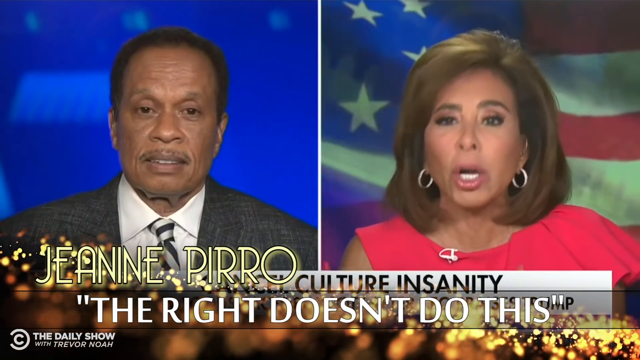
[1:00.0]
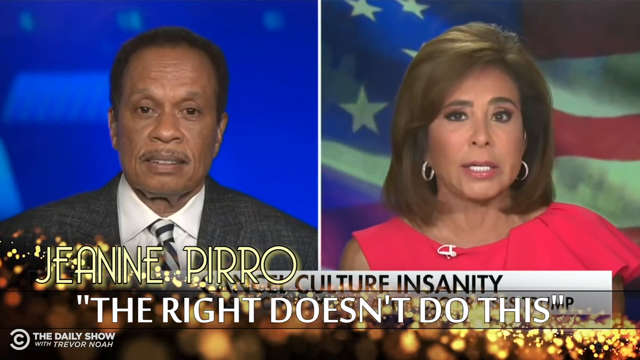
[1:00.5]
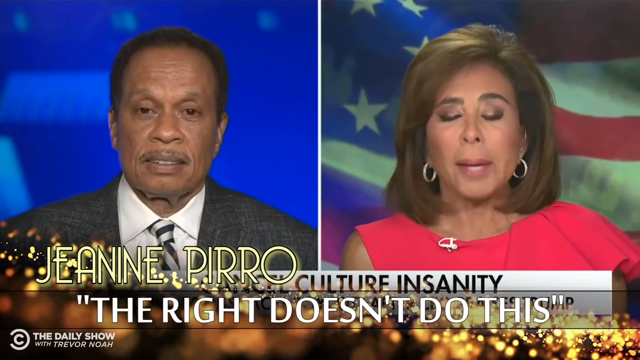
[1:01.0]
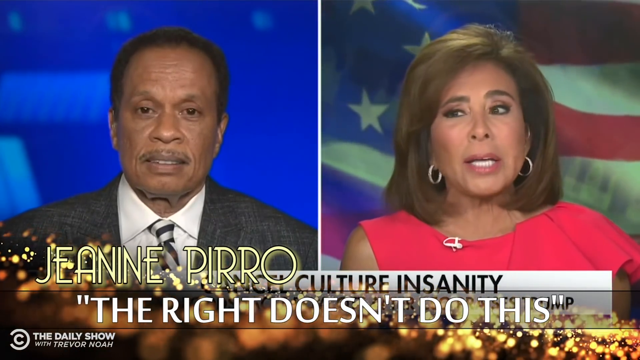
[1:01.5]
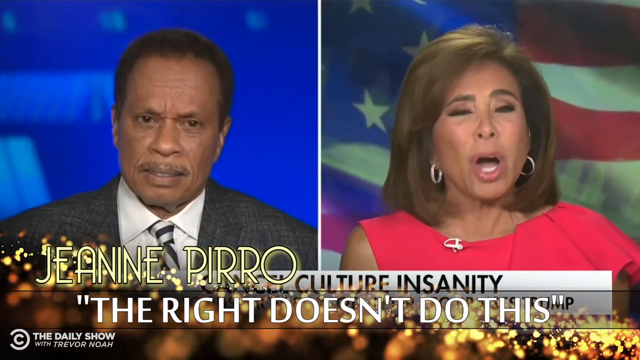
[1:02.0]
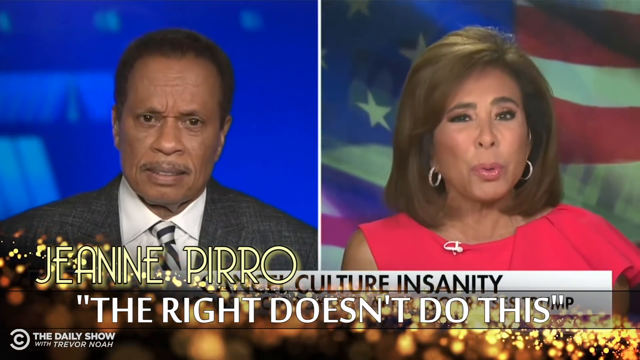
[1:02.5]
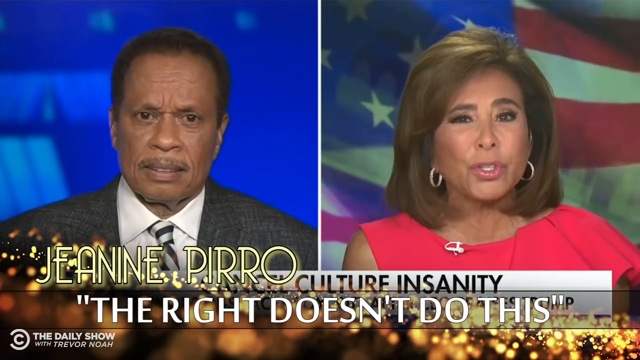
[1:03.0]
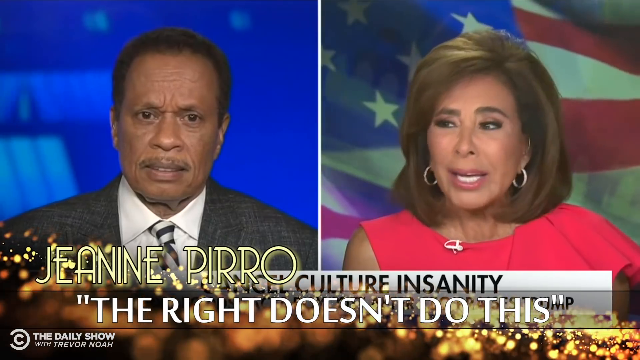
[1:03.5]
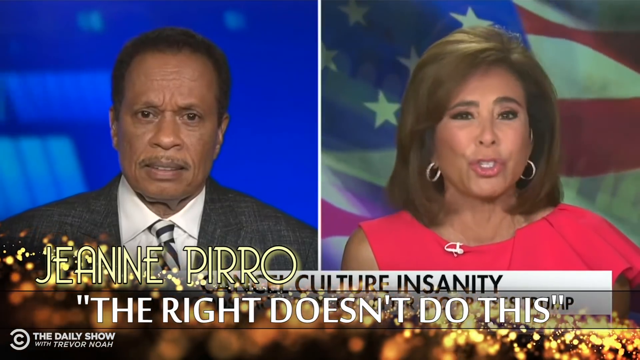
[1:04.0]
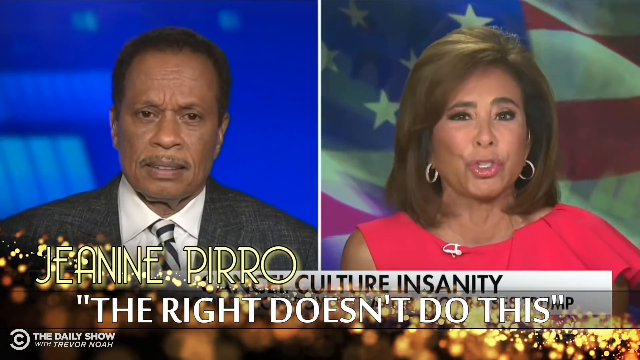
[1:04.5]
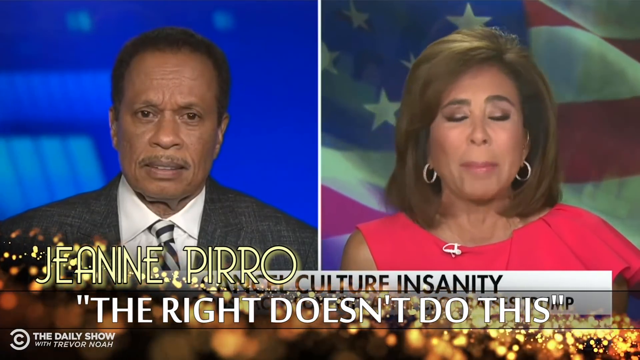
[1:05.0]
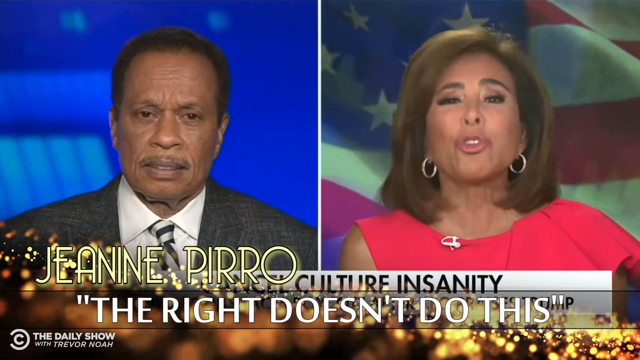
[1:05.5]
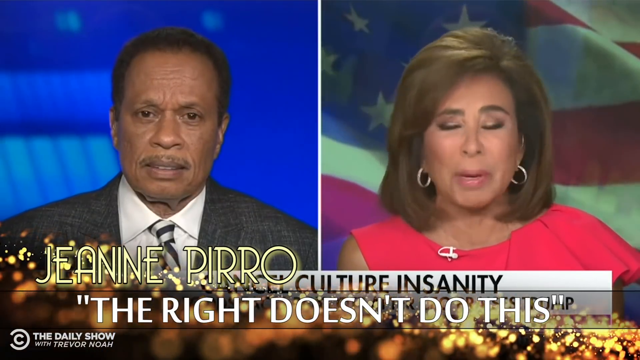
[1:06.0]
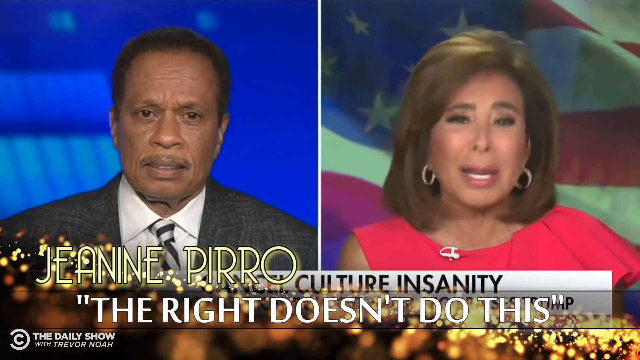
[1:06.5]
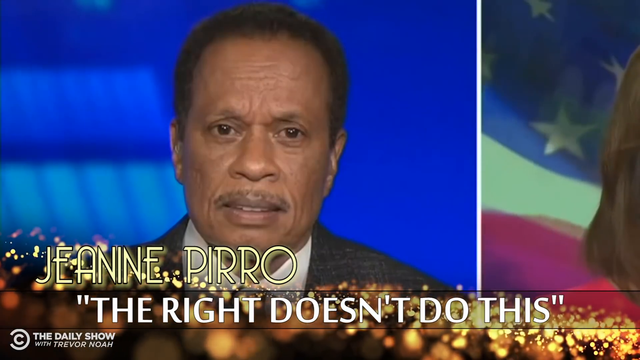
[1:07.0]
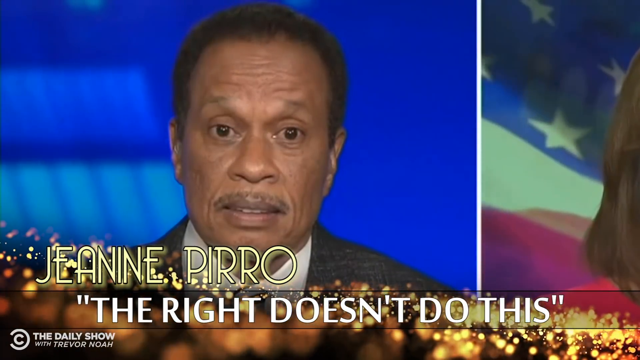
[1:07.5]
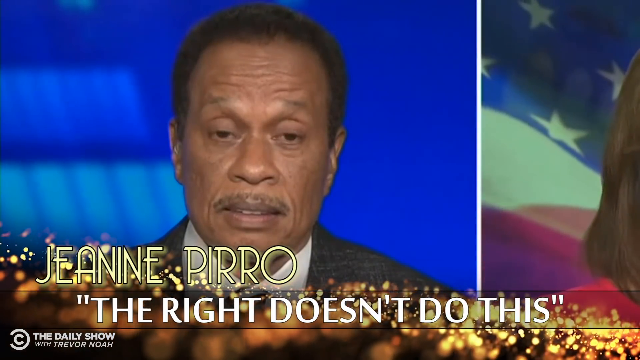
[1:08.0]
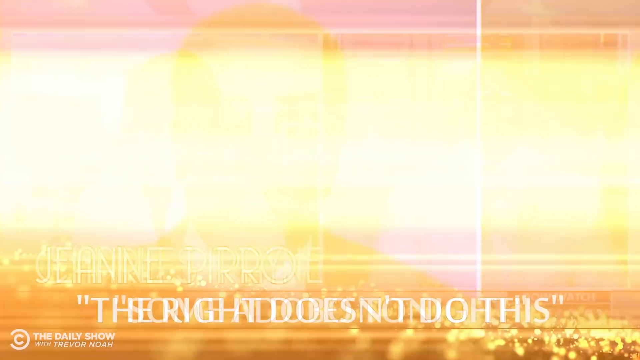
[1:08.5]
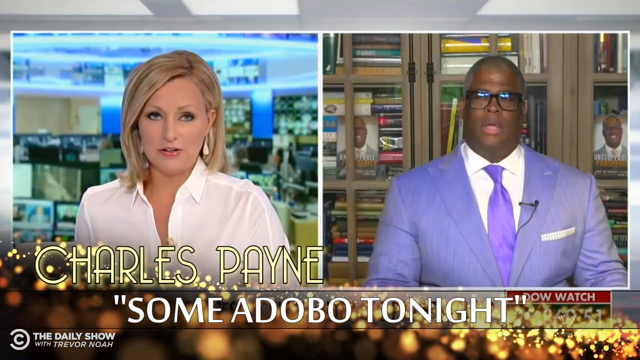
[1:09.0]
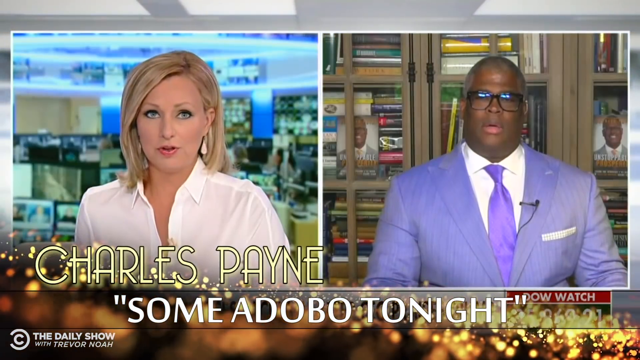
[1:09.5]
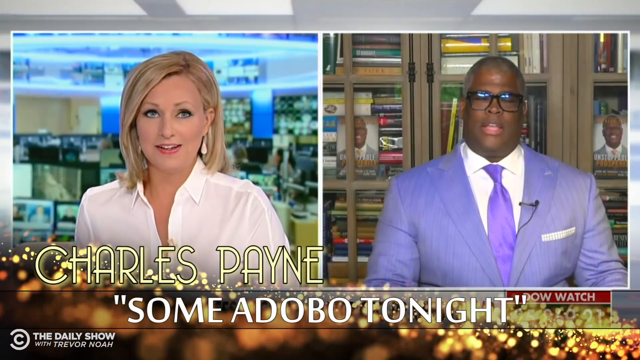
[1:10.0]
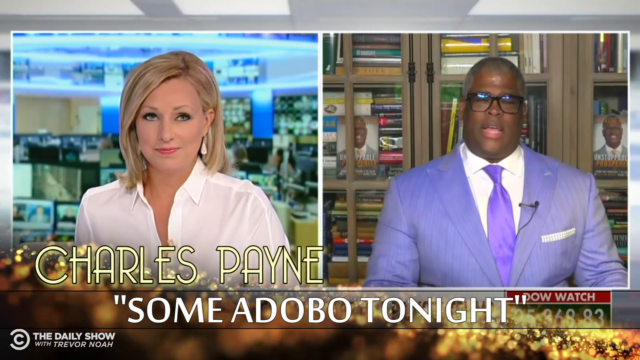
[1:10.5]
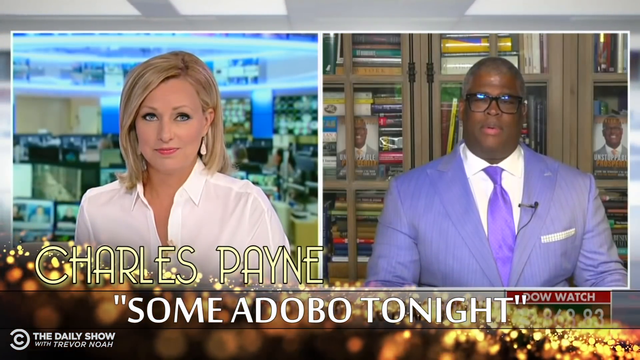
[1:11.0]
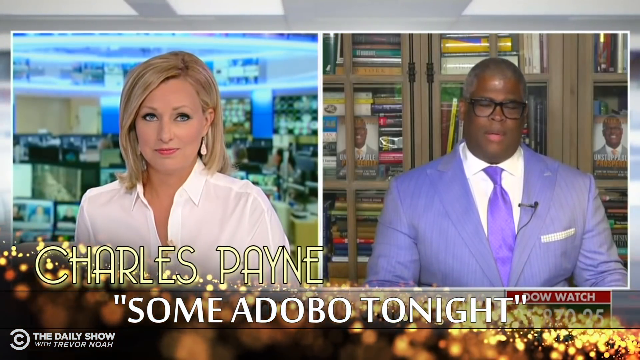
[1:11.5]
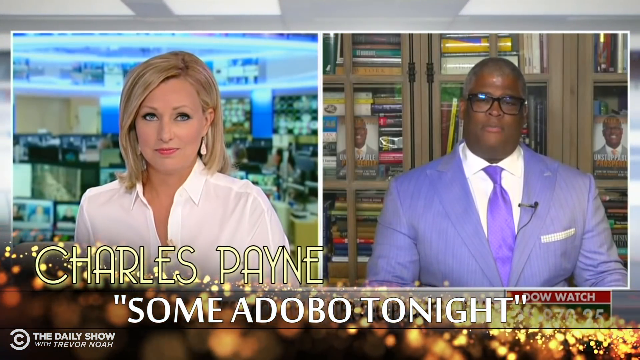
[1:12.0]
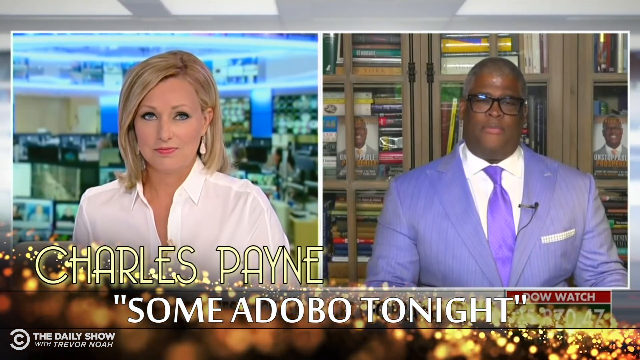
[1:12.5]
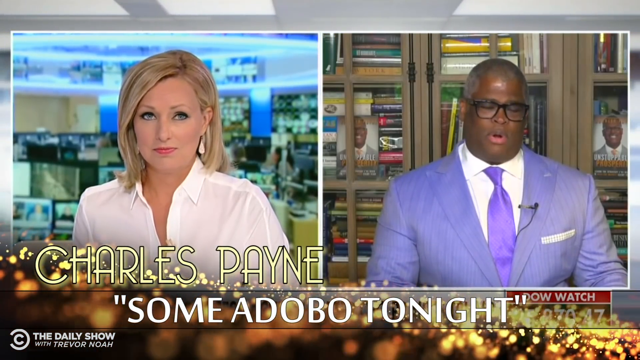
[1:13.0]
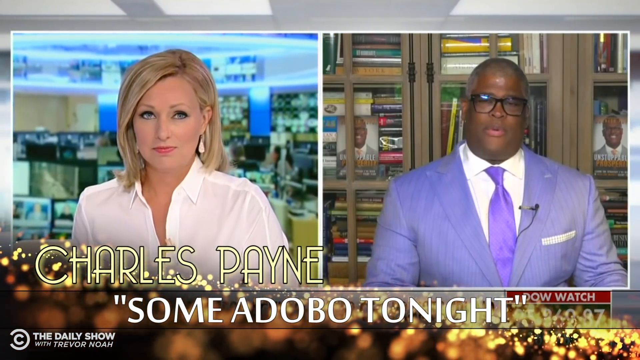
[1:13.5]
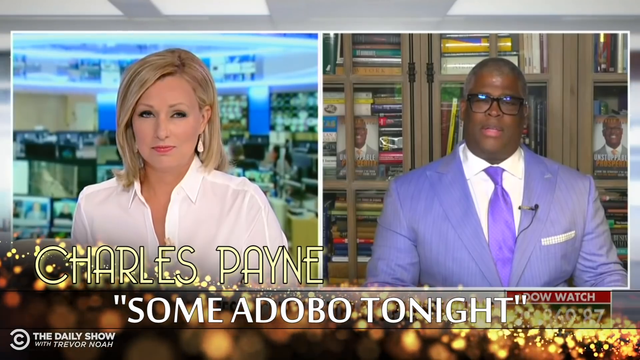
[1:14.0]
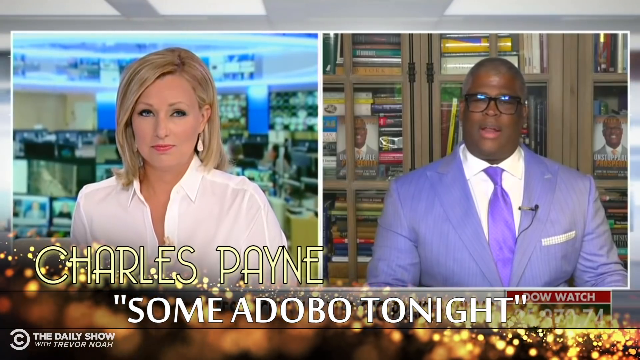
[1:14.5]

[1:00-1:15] In The Daily Show's comedy bit, the 64th Annual Outragees, the nominee is Jeanine Pirro, with the text "the right doesn't do this" in quotes below her. She is on Fox News in a split screen with a man on the left, speaking, with an American flag waving behind her. The video then zooms in, in a seemingly comedic way, on the reaction of the man on the left, who apparently looks surprised. It then transitions to the next nominee, Charles Payne, with the text "some adobo tonight" below him. He is in an interview on Fox News in a split screen, on the right side, dressed in a very fine suit, speaking to a female interviewer on the left.